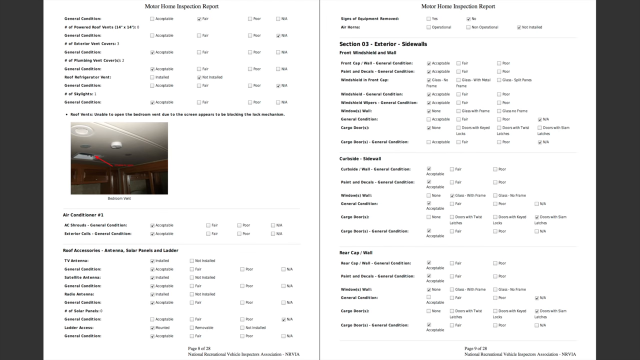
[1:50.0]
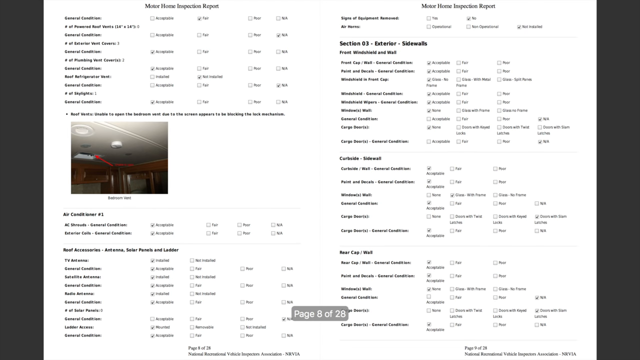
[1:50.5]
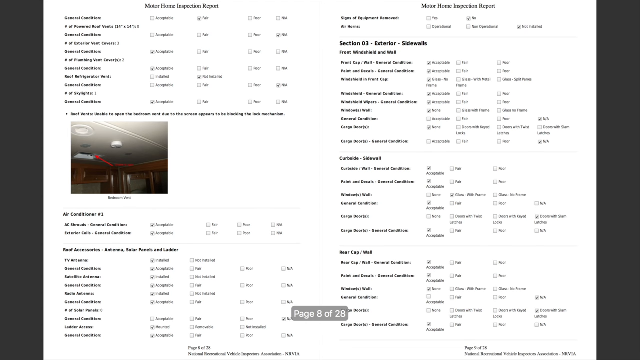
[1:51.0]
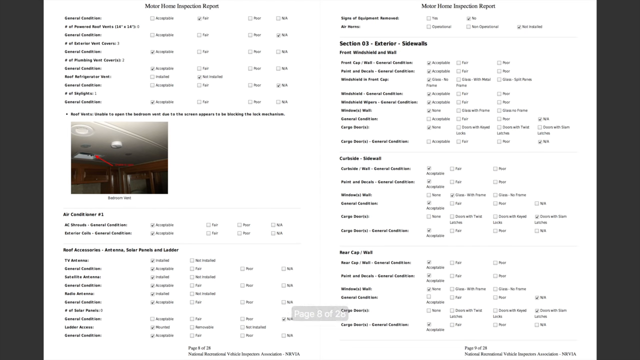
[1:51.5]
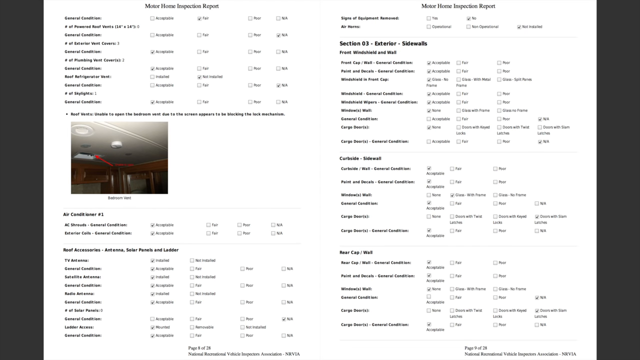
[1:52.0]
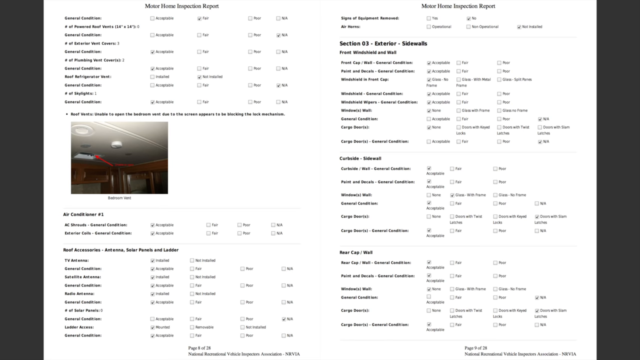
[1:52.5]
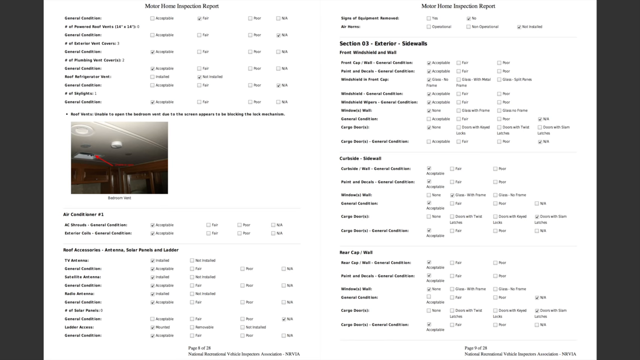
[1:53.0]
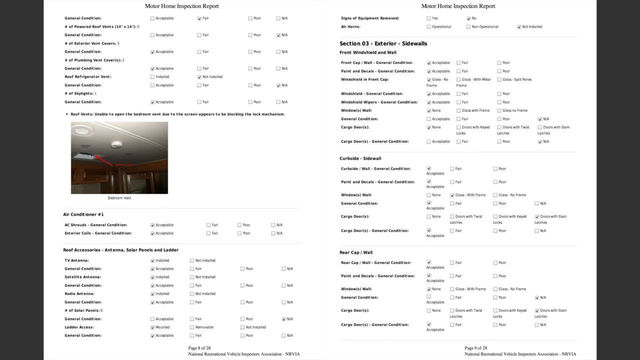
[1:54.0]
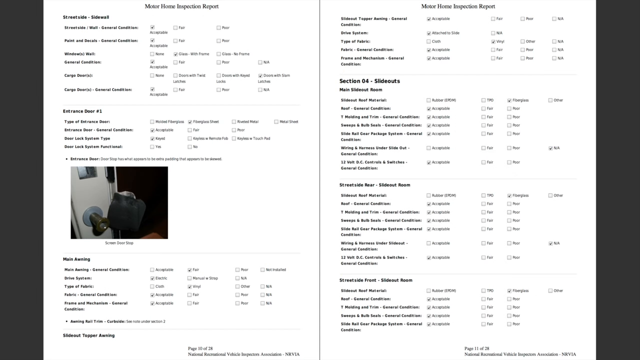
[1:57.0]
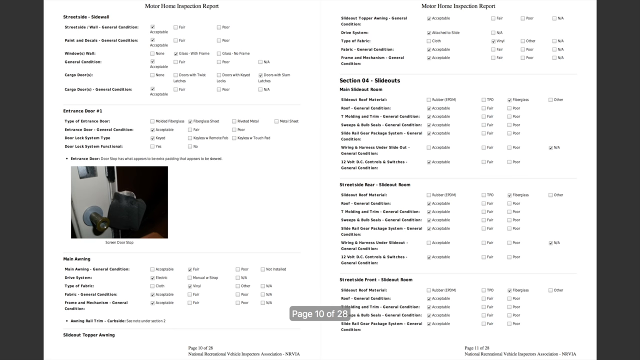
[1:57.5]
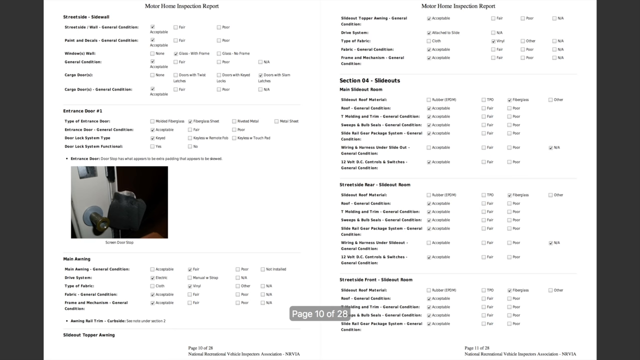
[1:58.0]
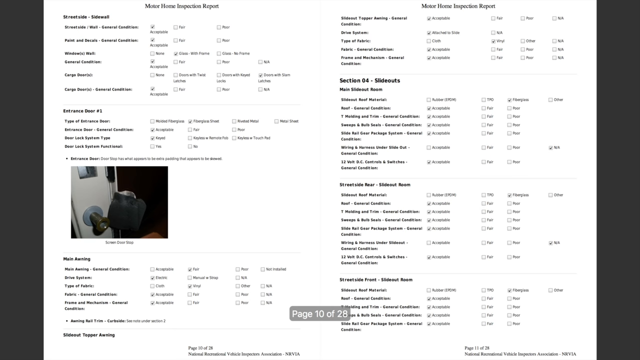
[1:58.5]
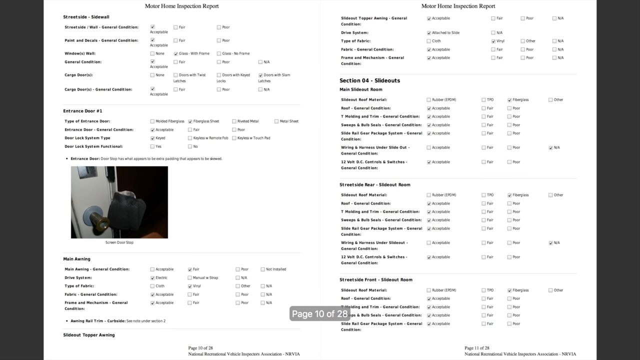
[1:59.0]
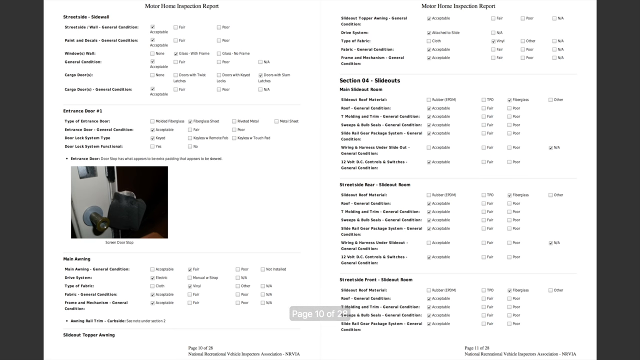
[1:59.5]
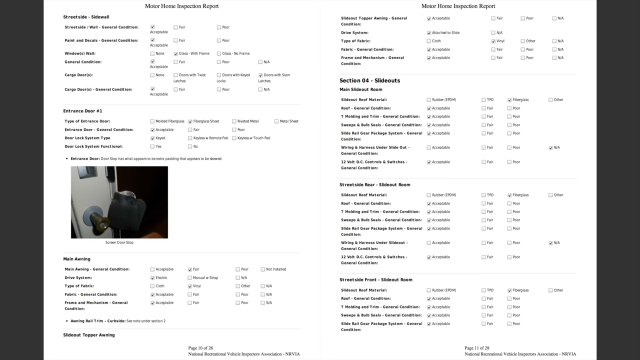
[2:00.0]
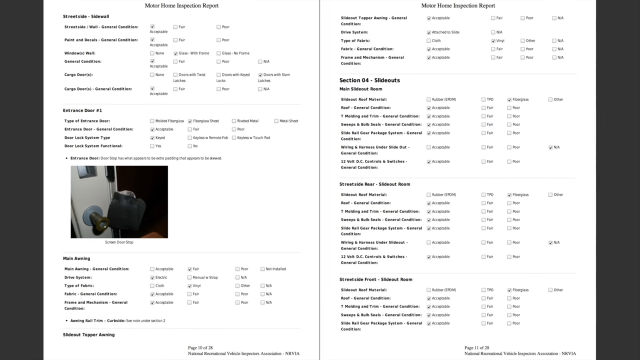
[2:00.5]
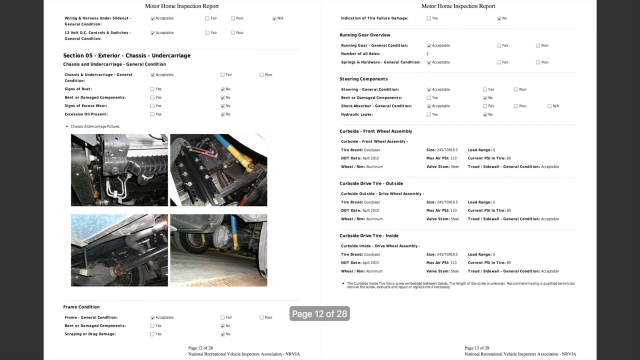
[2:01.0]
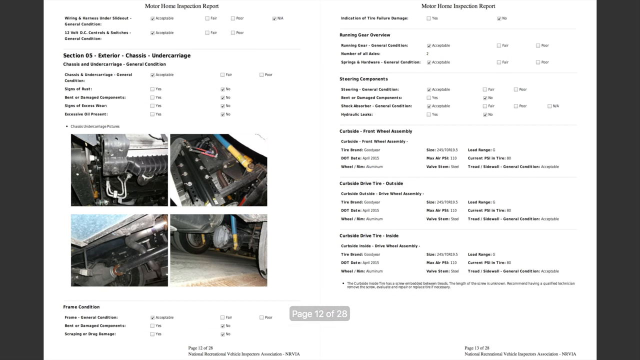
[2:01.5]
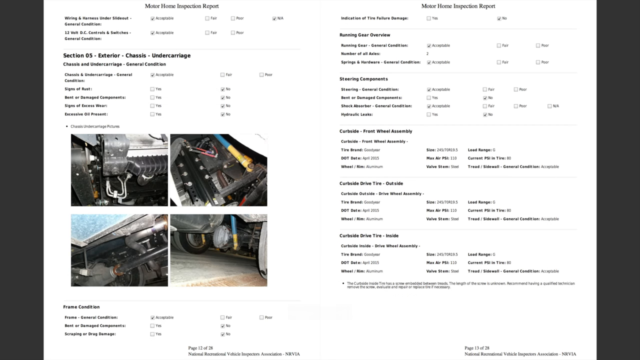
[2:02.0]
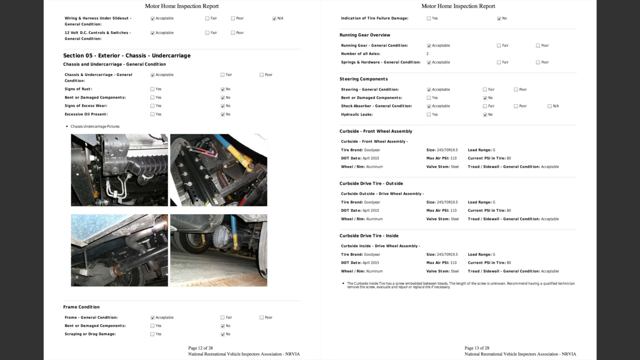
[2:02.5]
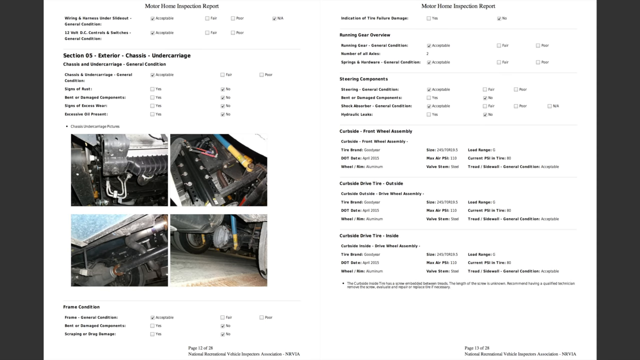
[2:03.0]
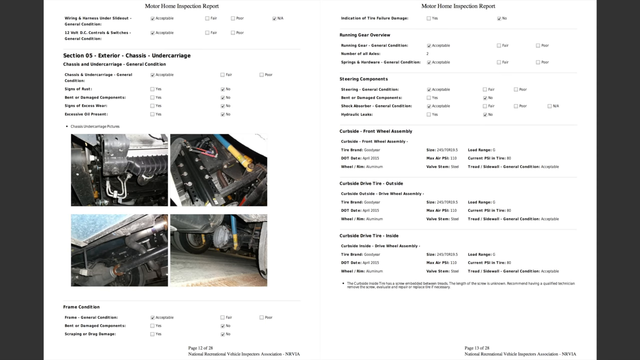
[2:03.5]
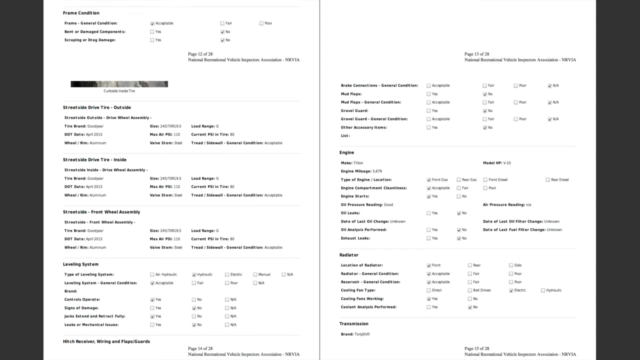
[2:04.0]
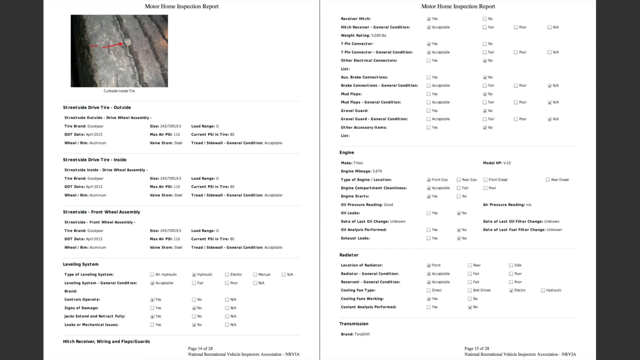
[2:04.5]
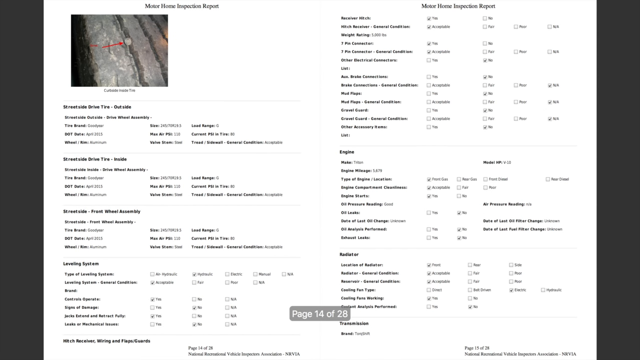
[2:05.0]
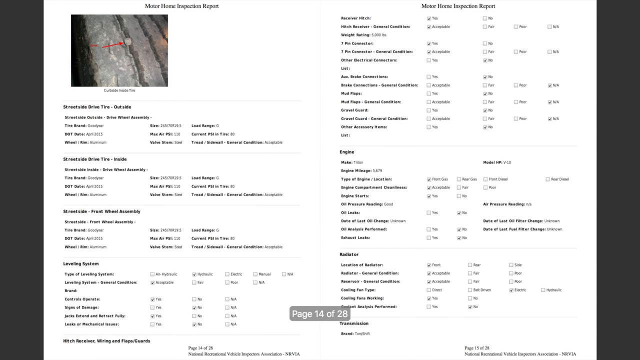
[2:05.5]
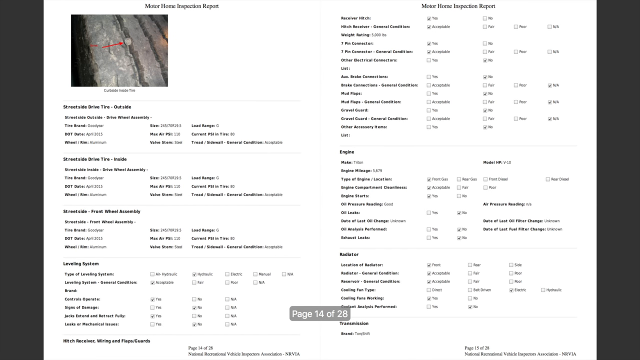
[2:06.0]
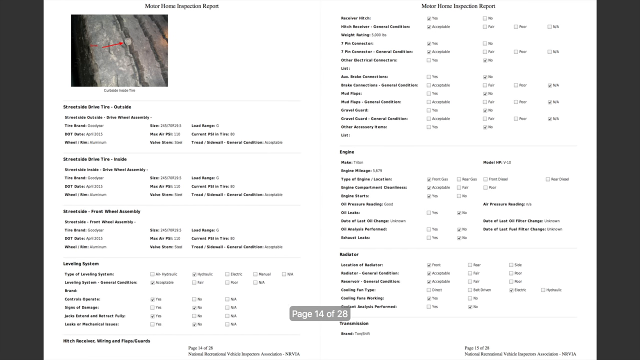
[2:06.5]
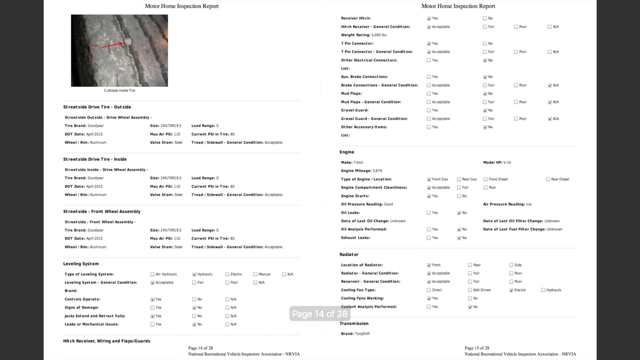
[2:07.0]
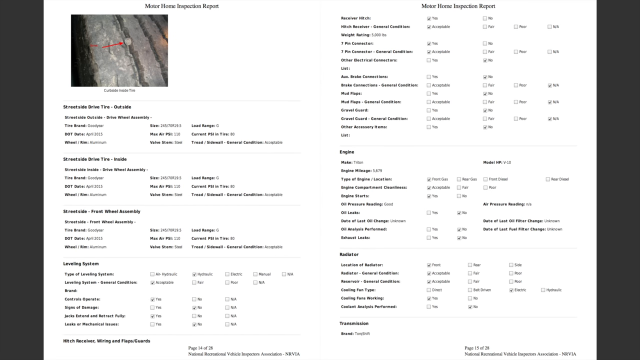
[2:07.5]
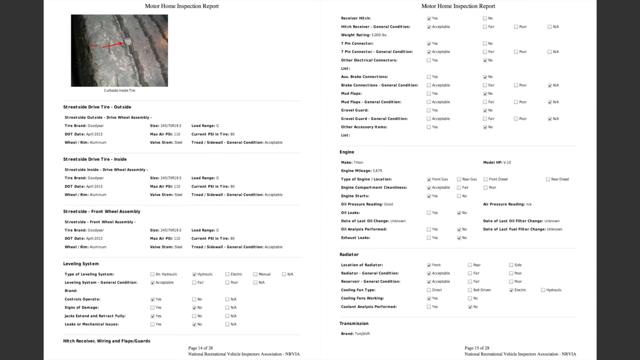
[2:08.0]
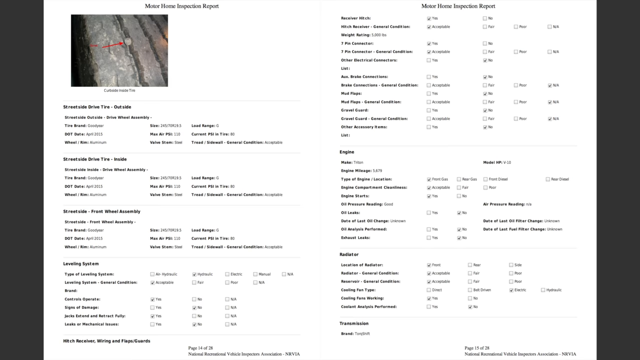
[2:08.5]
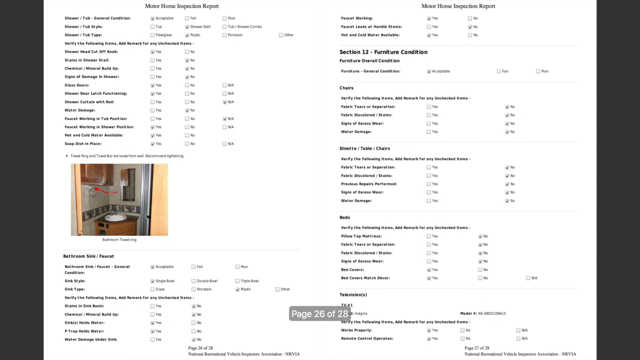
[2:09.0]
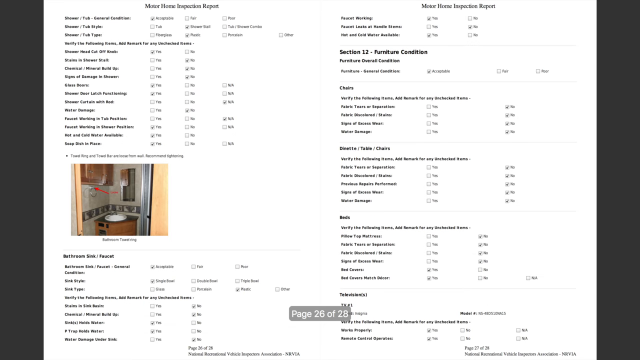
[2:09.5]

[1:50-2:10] More of the sheets are shown, with a bunch of checkboxes and terms to the left of them, plus more pictures with red arrows pointing to specific places inside the vehicle. The pages are scrolled through quickly, reaching page 14 and then jumping all the way to page 26. The text is very small, but at the top of some of the pages it says "motor home inspection report".